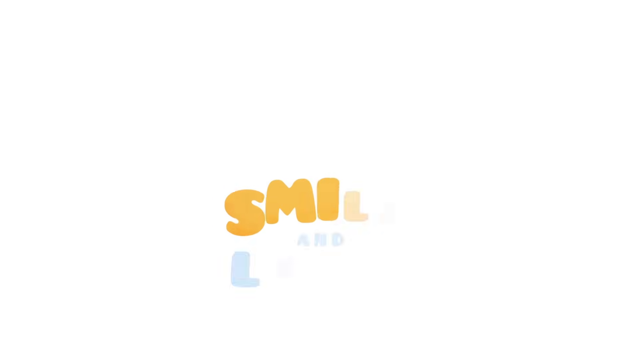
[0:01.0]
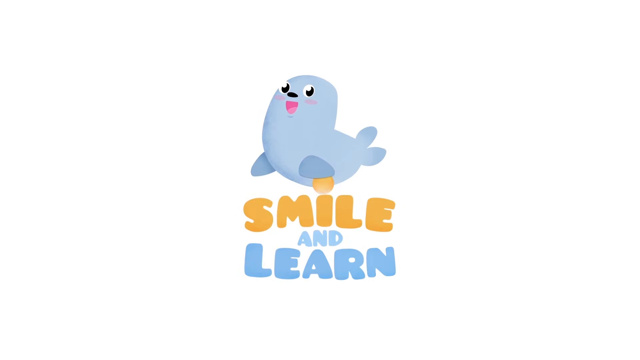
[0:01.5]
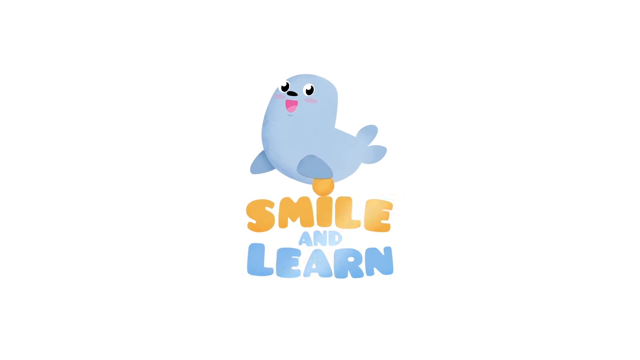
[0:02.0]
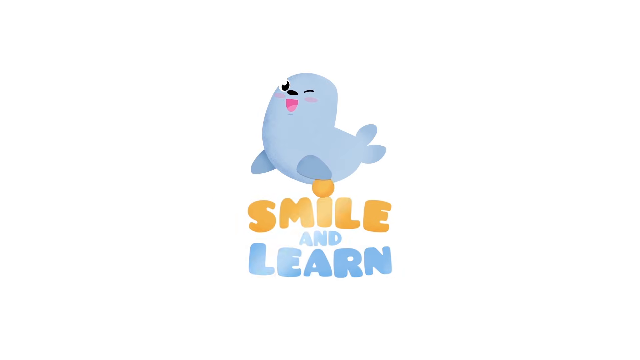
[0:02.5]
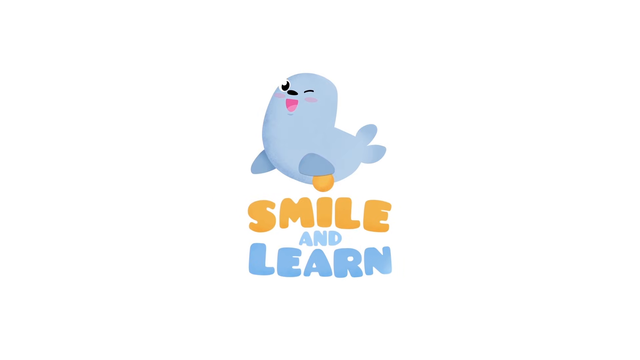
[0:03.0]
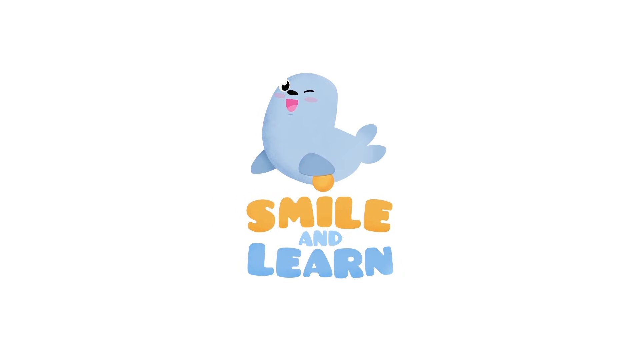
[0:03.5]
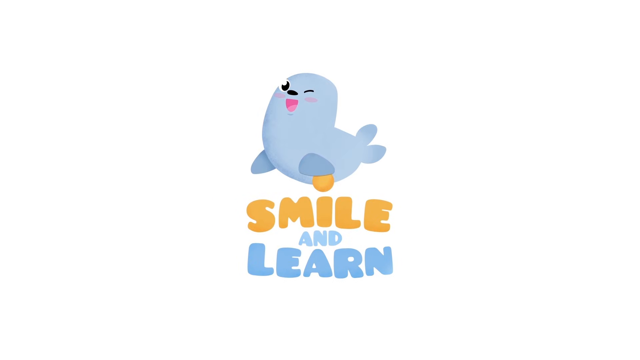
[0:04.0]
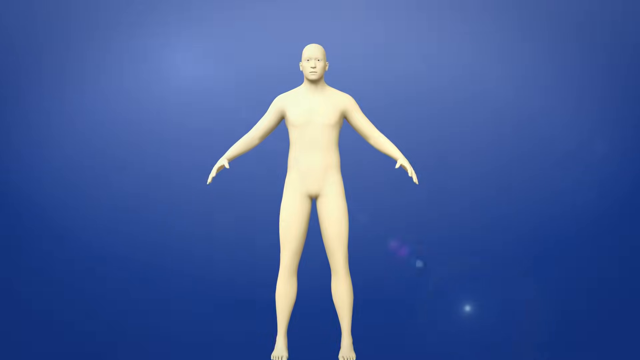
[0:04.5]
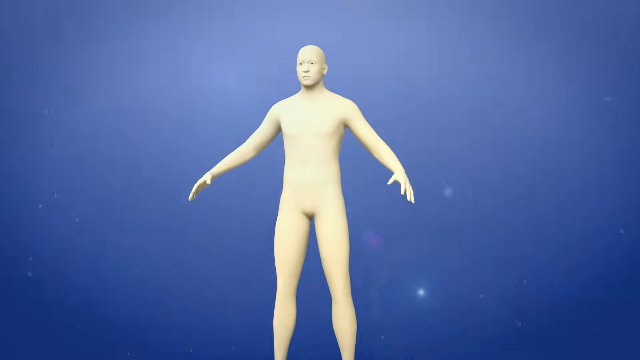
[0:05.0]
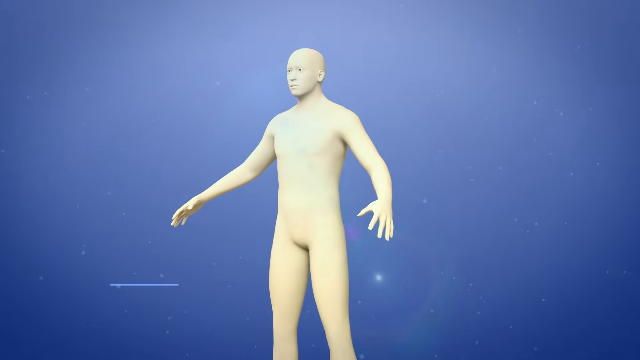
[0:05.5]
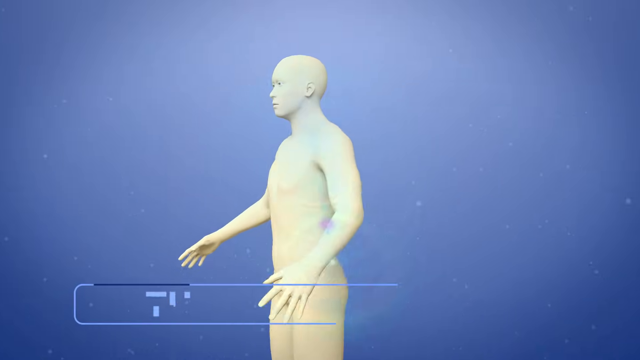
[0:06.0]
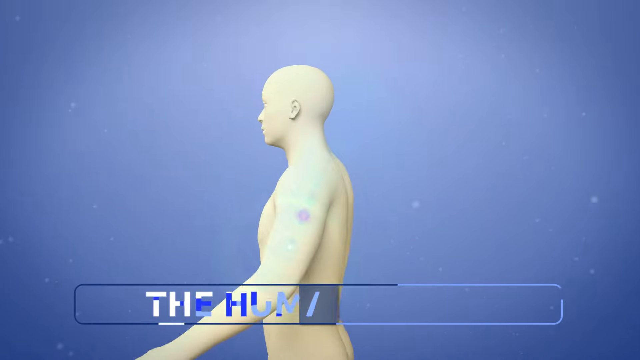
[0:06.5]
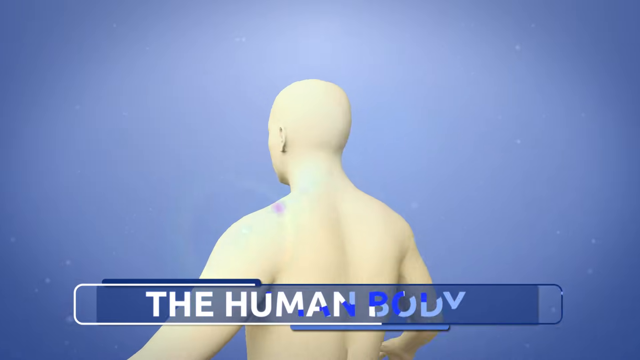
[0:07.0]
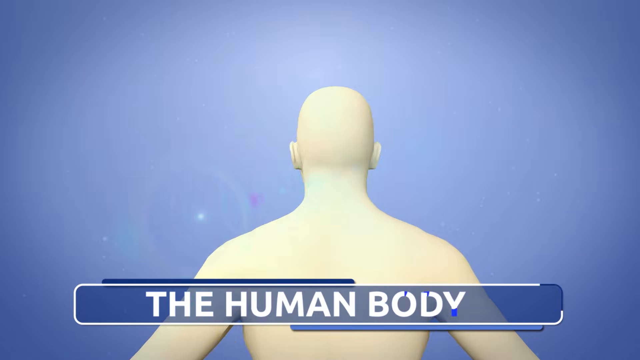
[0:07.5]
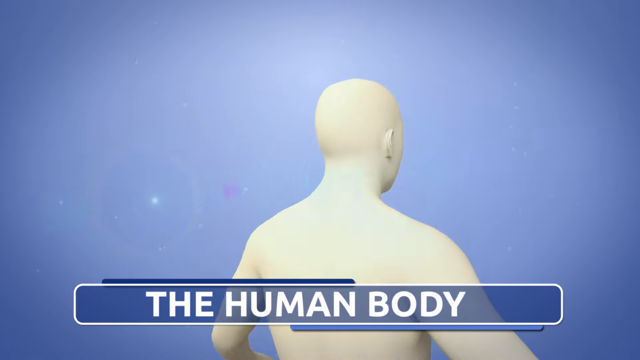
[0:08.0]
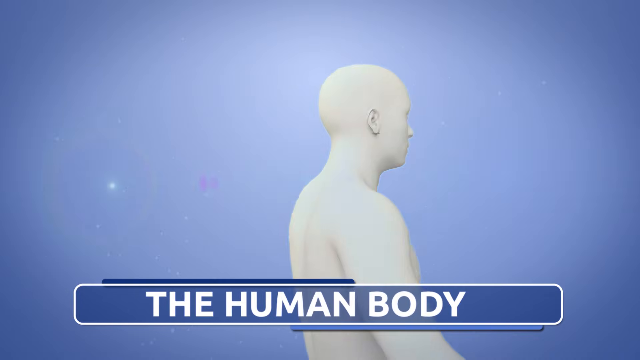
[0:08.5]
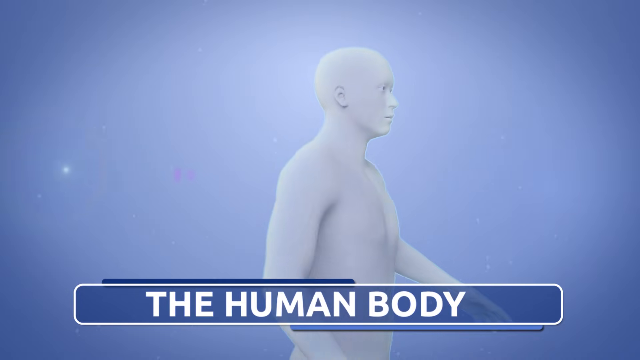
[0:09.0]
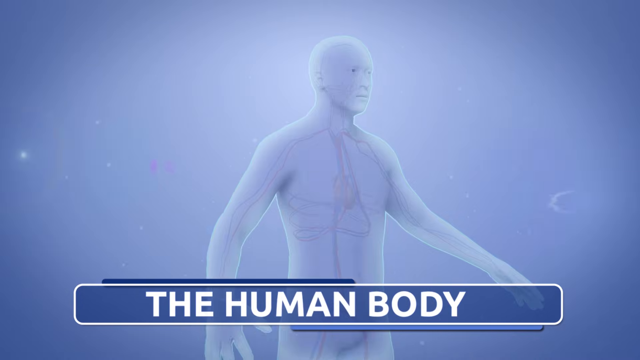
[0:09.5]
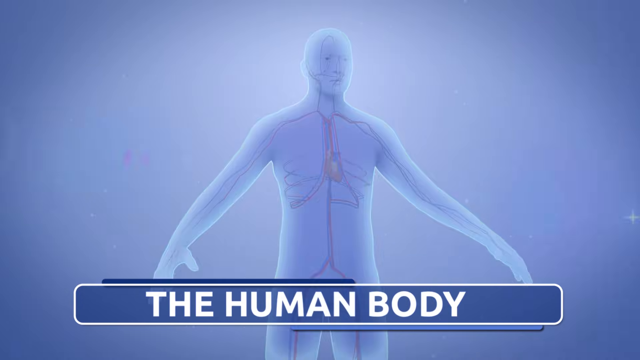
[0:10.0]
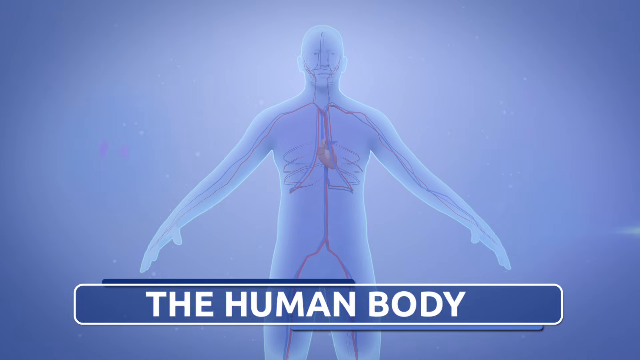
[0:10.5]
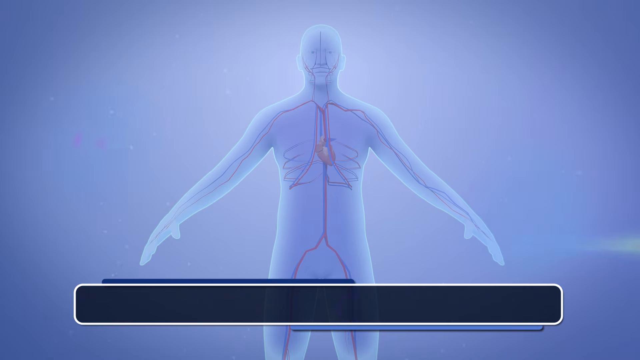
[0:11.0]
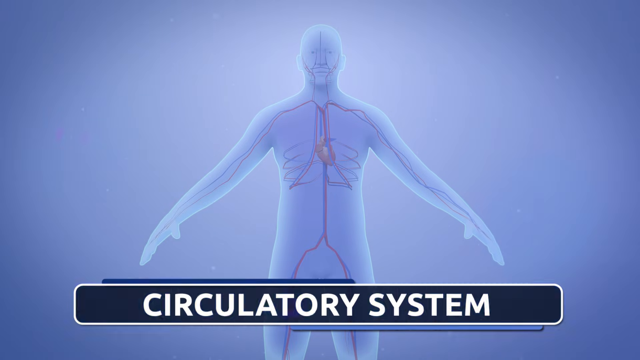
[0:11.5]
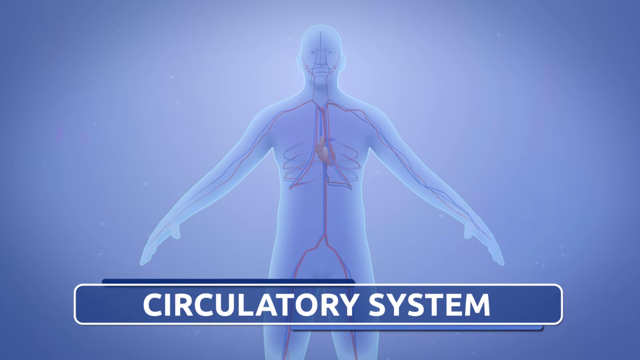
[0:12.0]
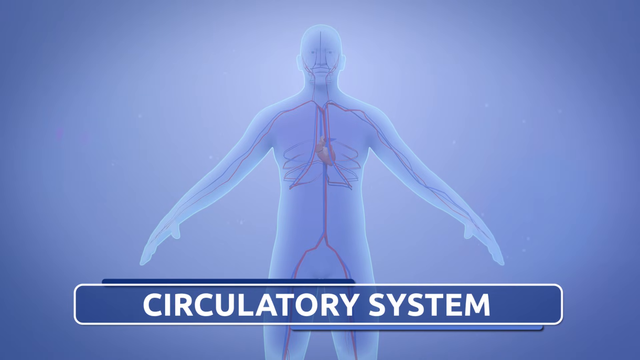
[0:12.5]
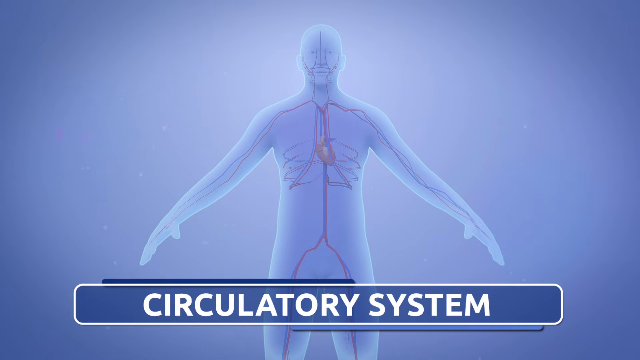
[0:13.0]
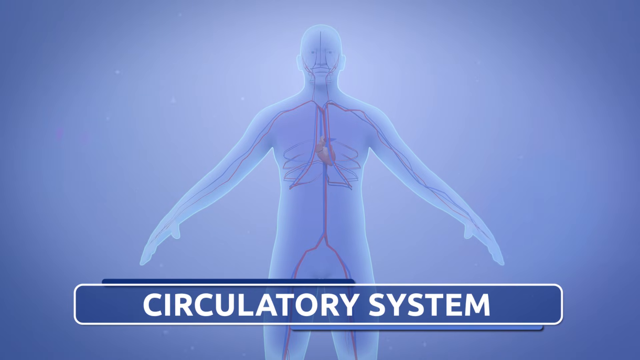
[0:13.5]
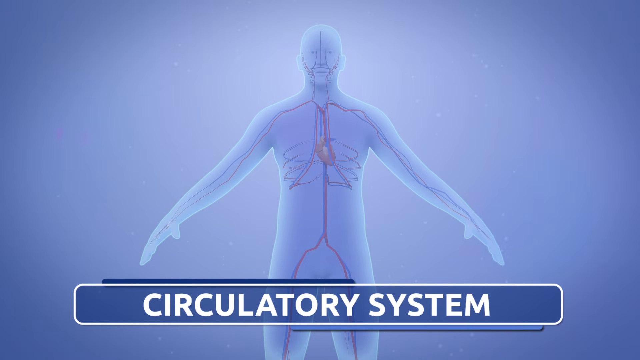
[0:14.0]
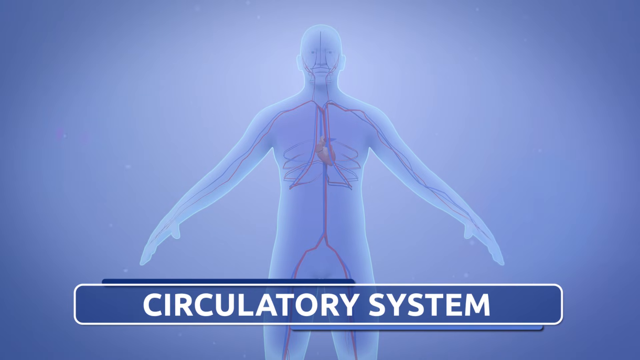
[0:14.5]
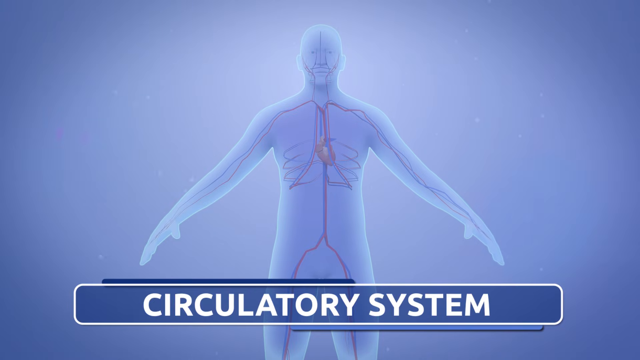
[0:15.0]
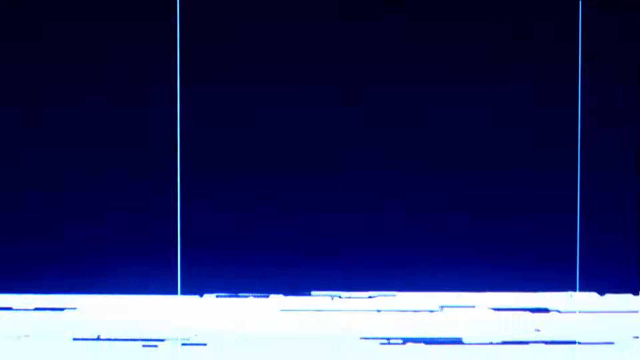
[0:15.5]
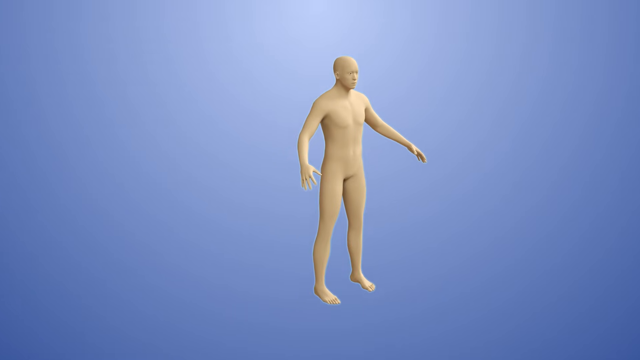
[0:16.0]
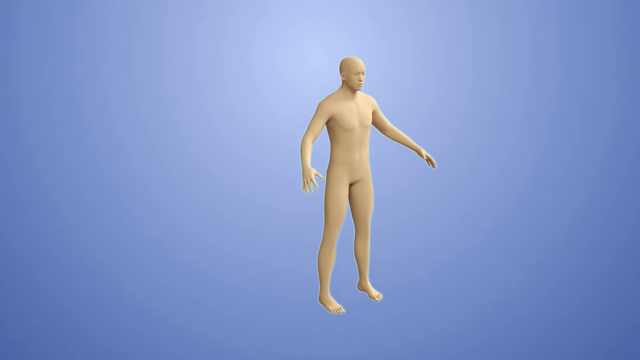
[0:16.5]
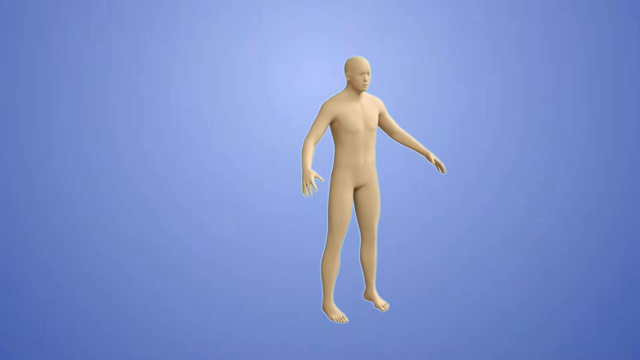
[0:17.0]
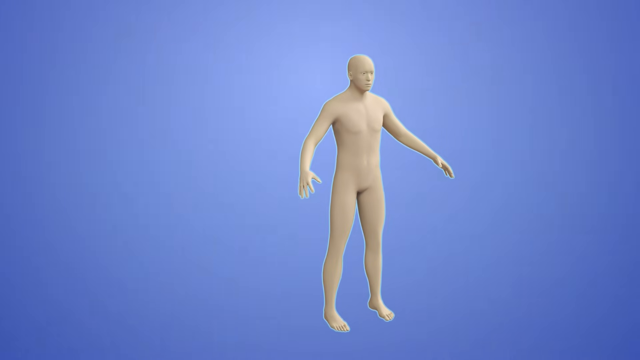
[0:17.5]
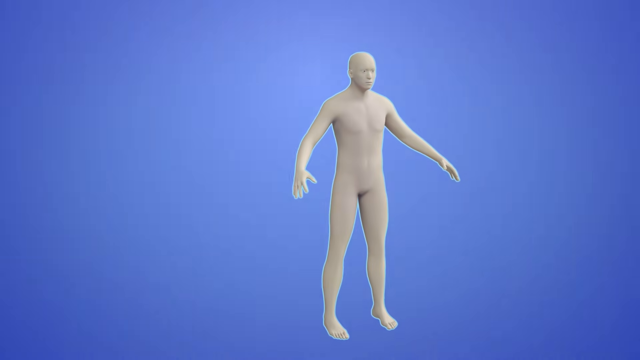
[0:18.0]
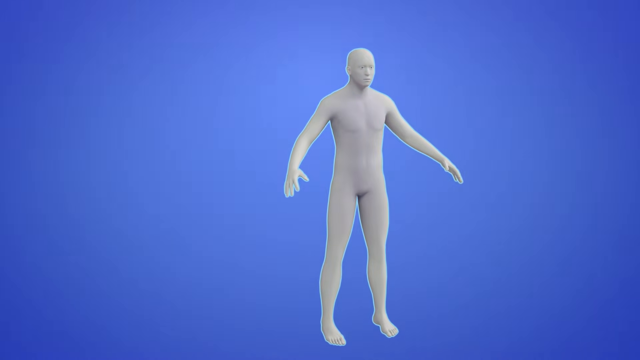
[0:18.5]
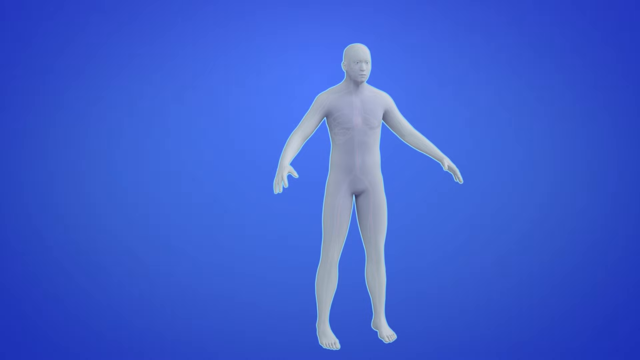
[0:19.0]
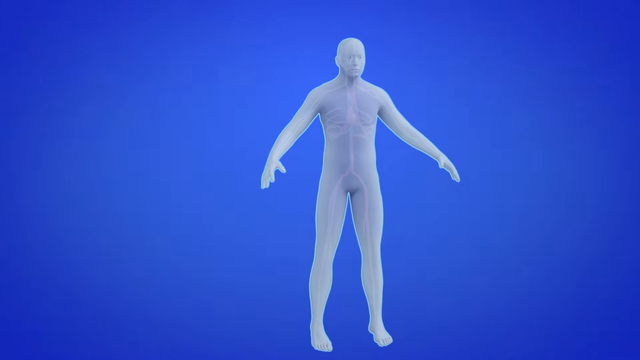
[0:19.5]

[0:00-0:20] The video opens with a title slide reading "Smile and Learn" with a seal that is giving an eye to the viewer. Next, a human body appears with the text "the human body". A scan of the inside of the body follows, showing lines and the heart at the center of the body, along with the title "circulatory system". Afterward, the same human body with skin appears again. The video is very dynamic, with many cycles of the screen and of the human body.